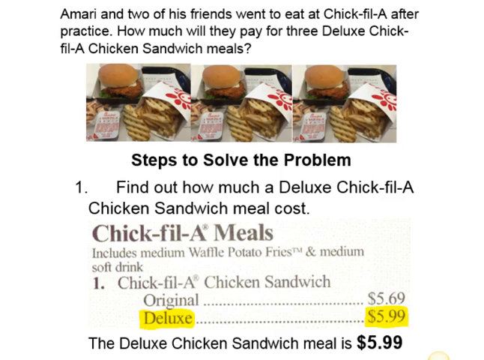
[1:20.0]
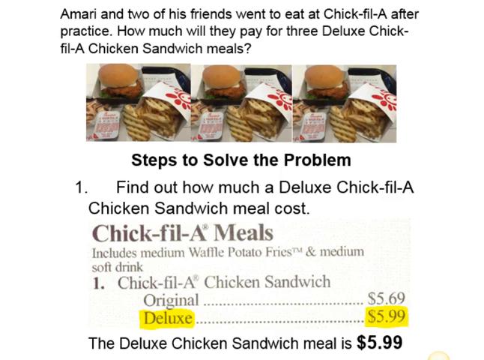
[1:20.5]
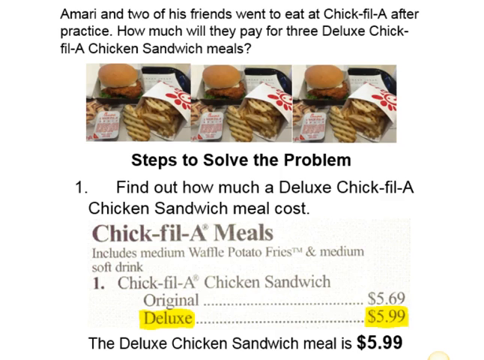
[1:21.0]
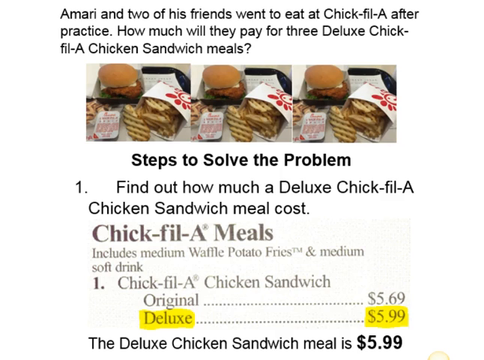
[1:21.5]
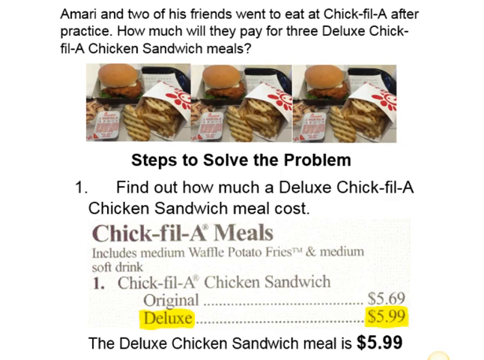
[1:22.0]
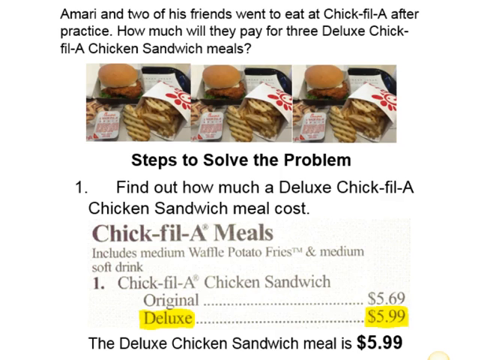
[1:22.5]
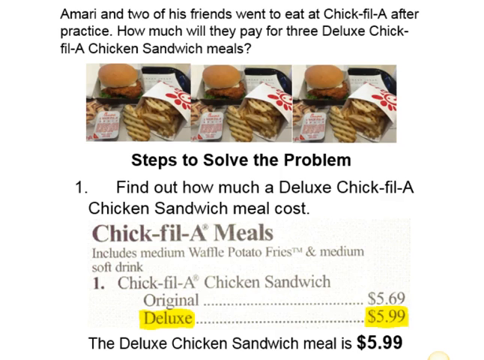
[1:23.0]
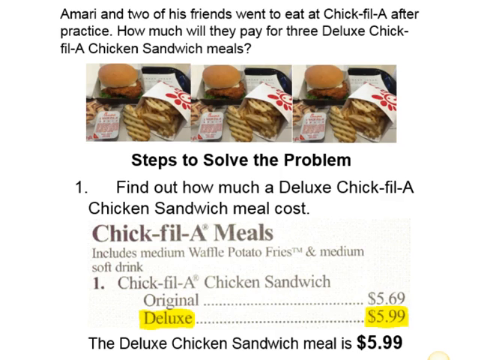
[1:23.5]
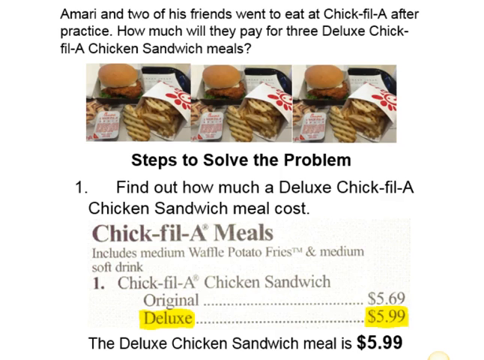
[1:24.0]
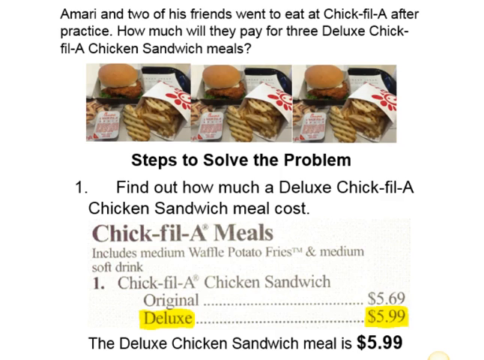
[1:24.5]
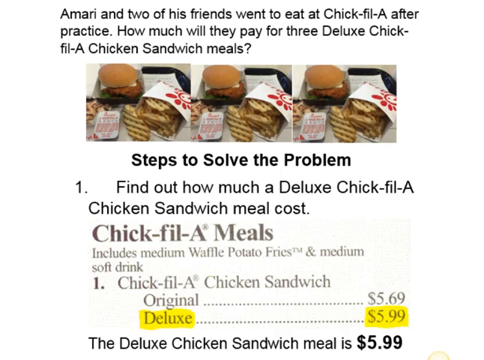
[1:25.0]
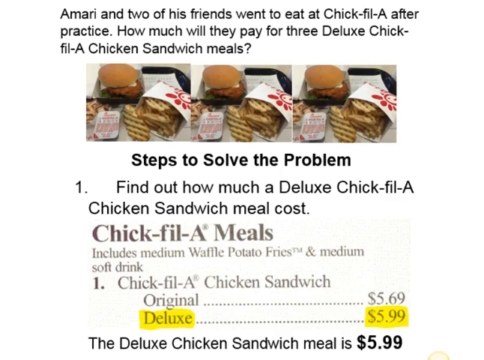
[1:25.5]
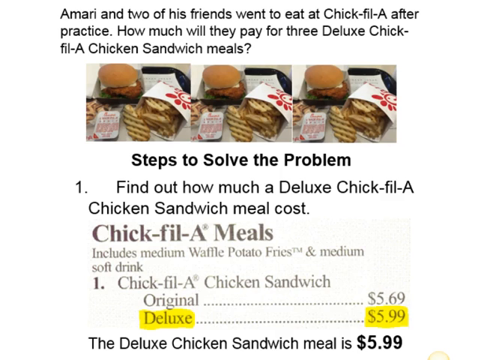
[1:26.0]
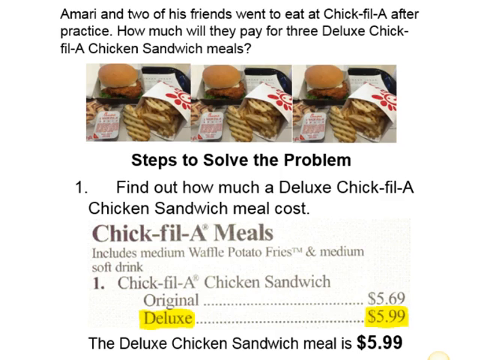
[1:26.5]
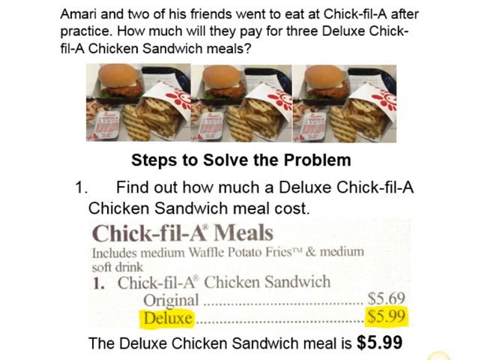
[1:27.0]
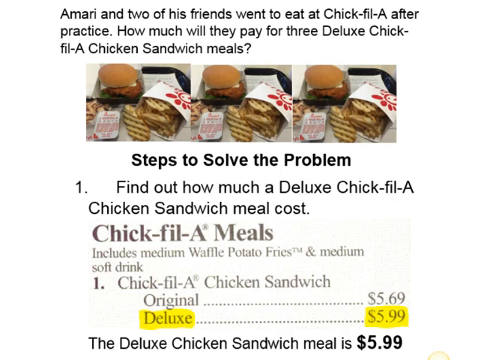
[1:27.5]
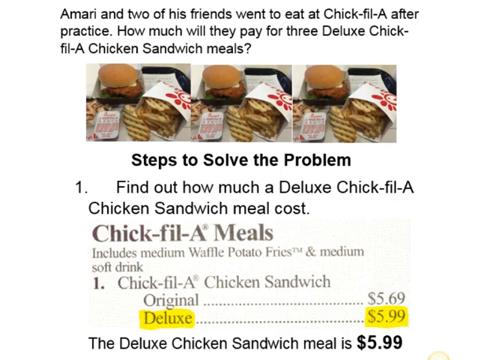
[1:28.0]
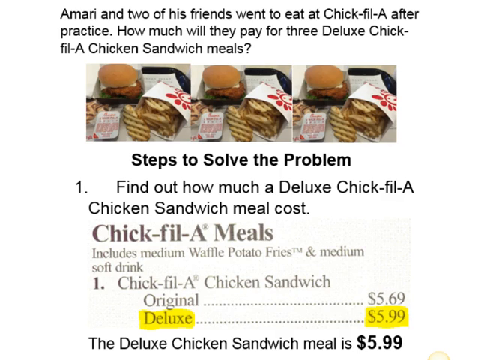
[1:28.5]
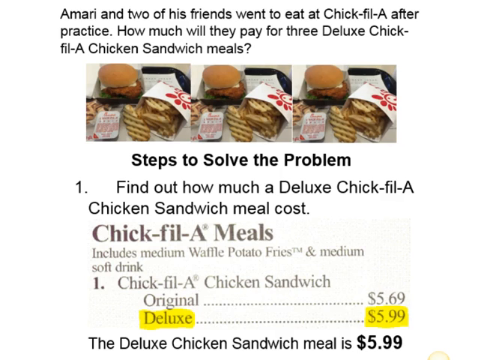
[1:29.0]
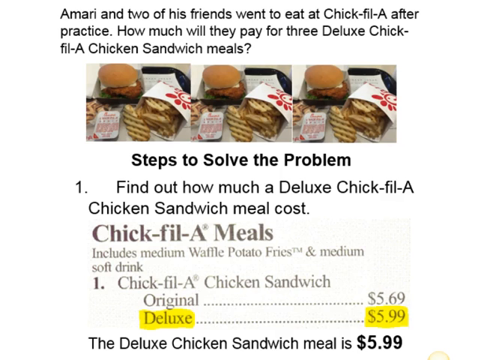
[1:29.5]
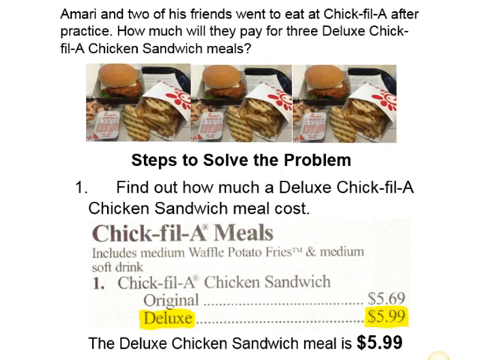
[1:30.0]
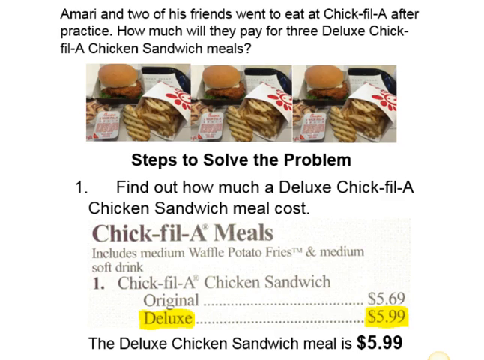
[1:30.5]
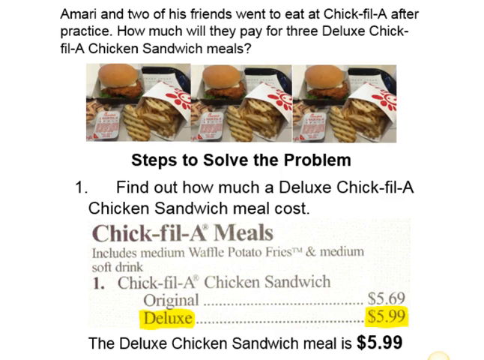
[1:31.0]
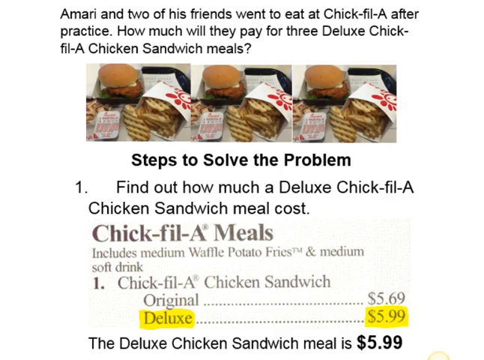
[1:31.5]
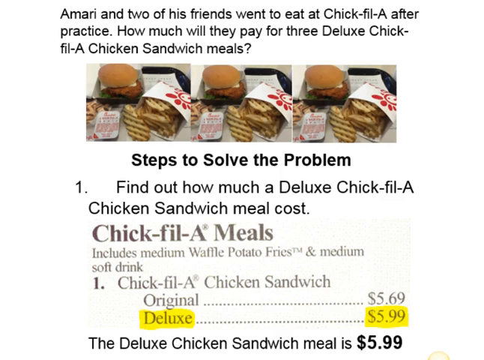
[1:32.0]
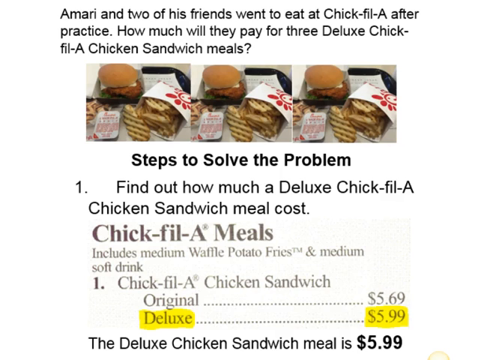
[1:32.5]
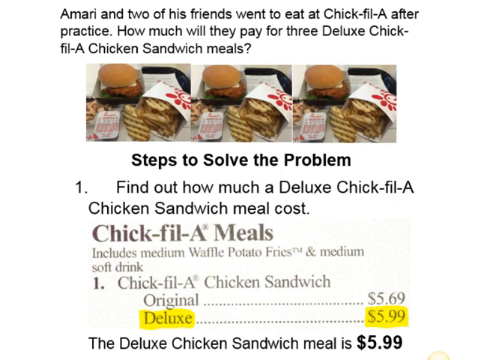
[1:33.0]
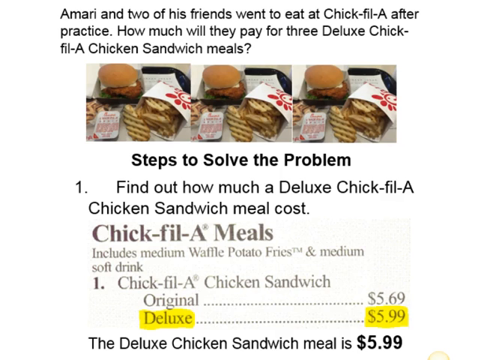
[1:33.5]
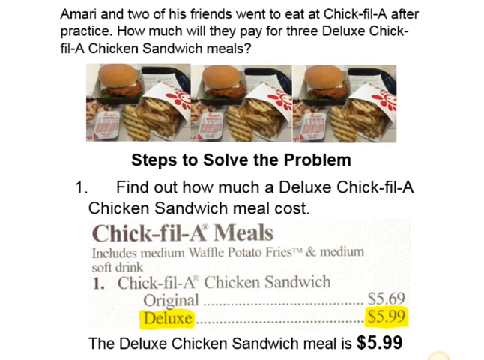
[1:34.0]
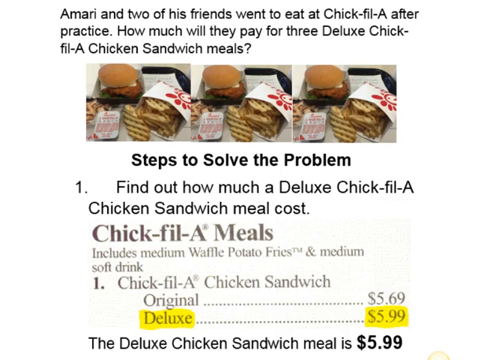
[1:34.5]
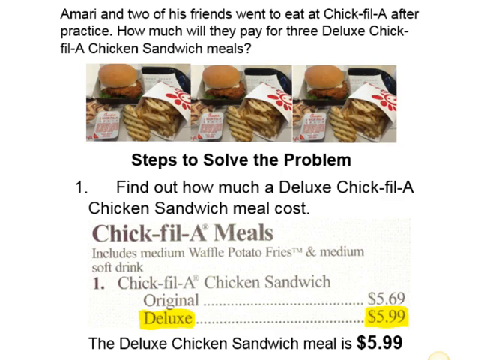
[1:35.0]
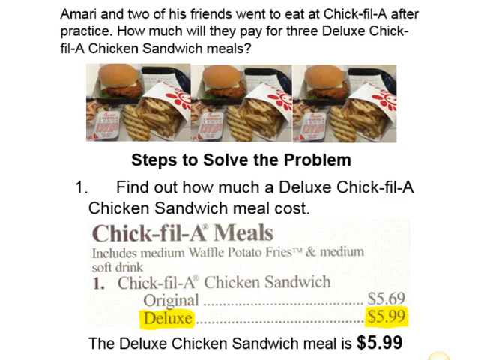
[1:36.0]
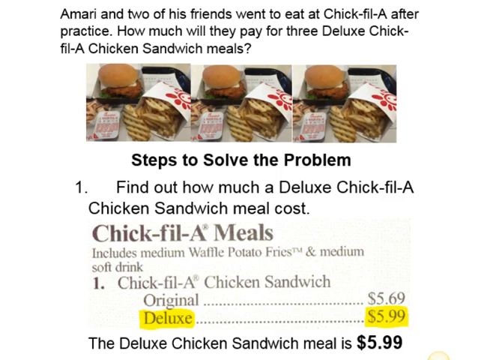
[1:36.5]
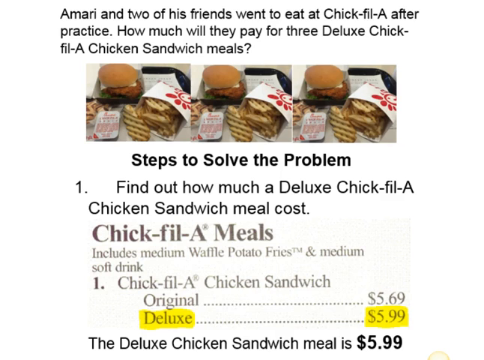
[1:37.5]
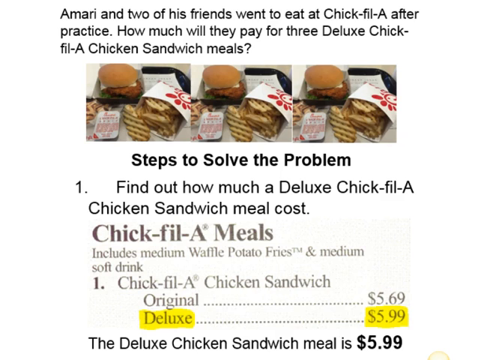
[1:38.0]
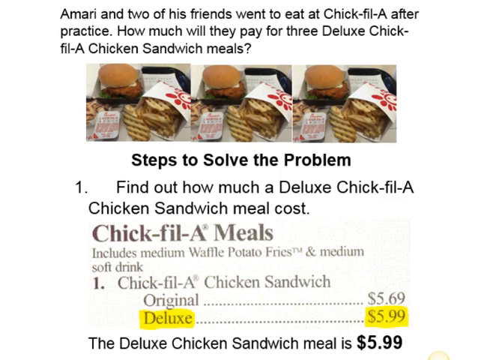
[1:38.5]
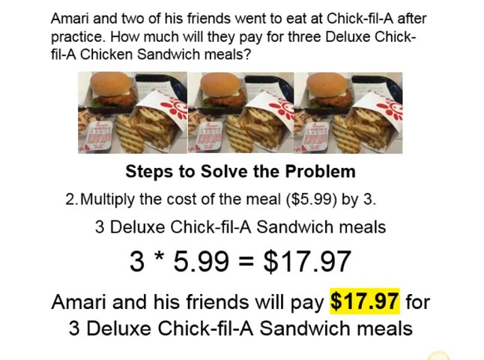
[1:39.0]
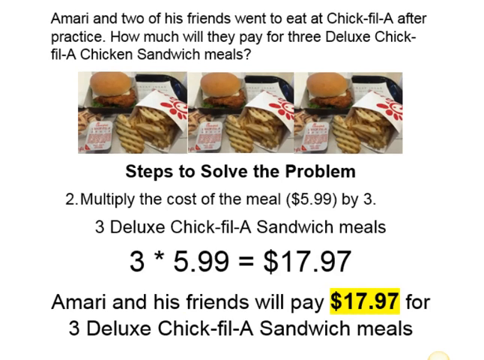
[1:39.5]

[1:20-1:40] The same screen continues, showing how to find out how much a deluxe Chick-fil-A chicken sandwich meal costs, which is $5.99. Almost nothing changes until the very end. At the top it says "Amari and two of his friends went to eat at Chick-fil-A after practice. How much will they pay for three deluxe Chick-fil-A chicken sandwich meals?" The three pictures of the same meal are shown, followed by "steps to solve the problem. Number one, find out how much a deluxe Chick-fil-A chicken sandwich meal costs," and a picture of the Chick-fil-A meals with the number one at $5.99 for a meal. At the very end the screen changes to show that "Amari and his friends will pay $17.97 for three deluxe Chick-fil-A sandwich meals."